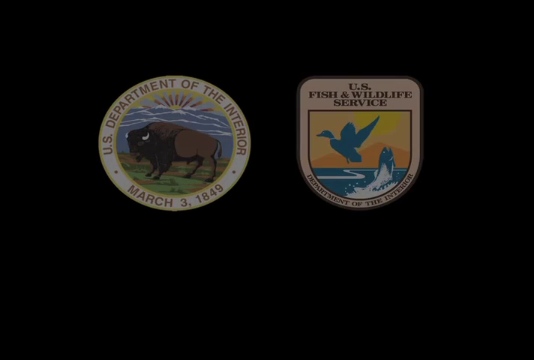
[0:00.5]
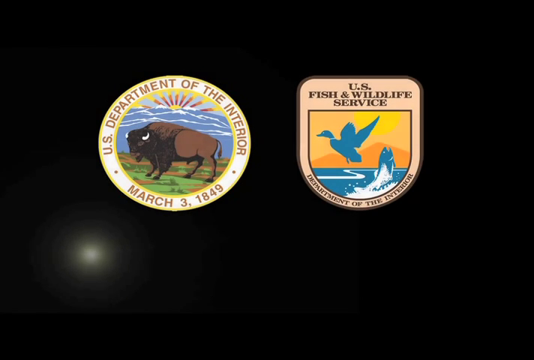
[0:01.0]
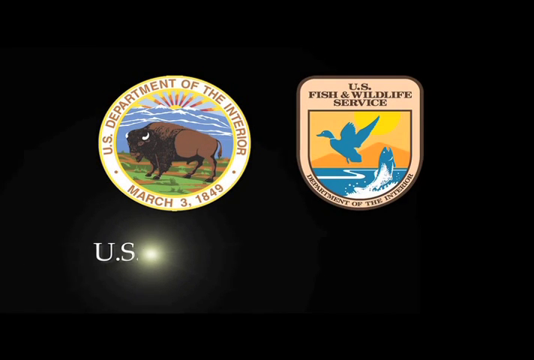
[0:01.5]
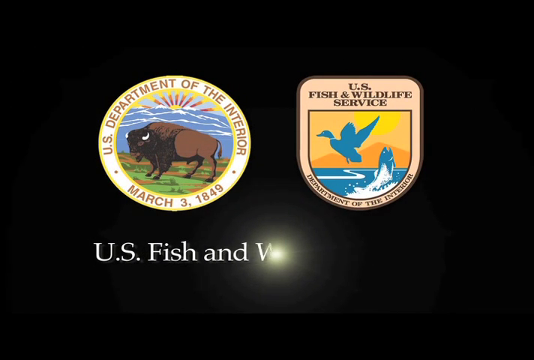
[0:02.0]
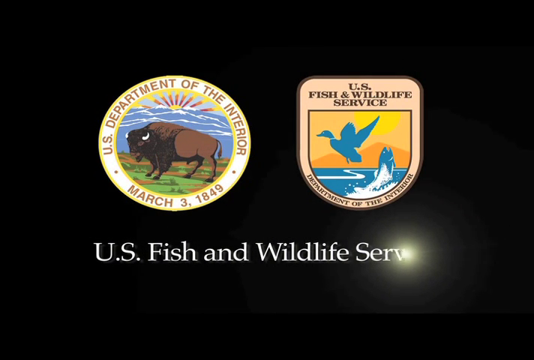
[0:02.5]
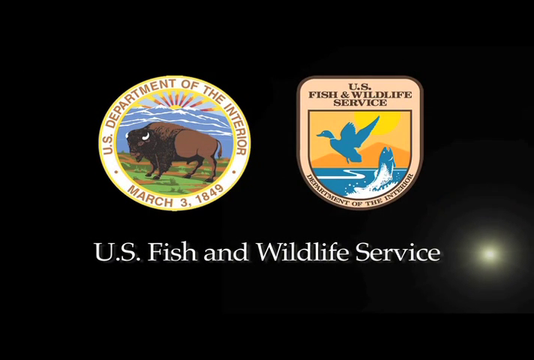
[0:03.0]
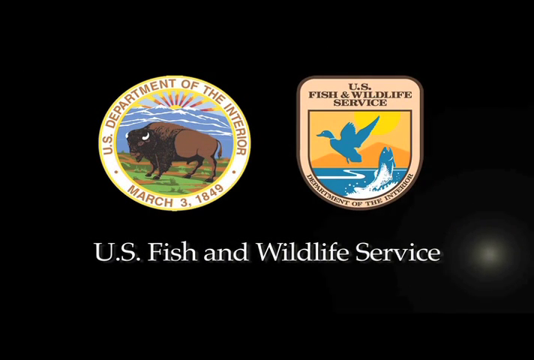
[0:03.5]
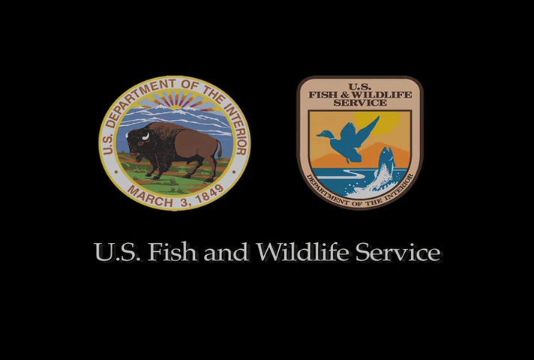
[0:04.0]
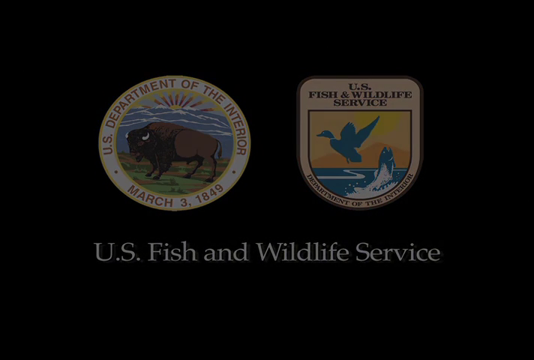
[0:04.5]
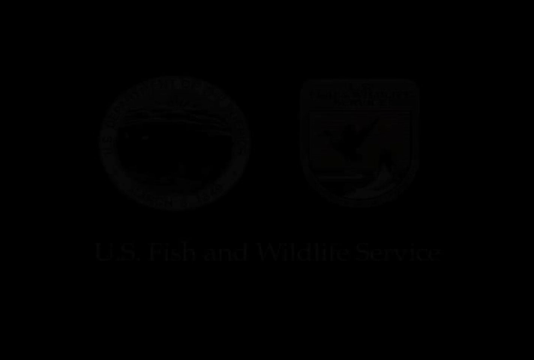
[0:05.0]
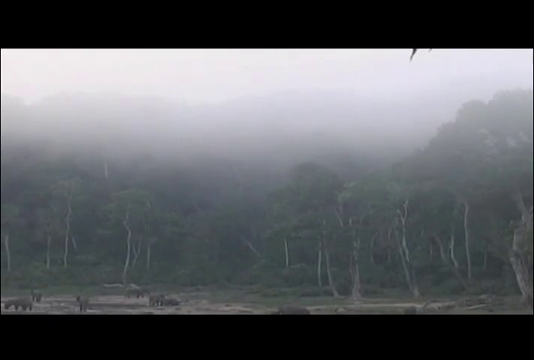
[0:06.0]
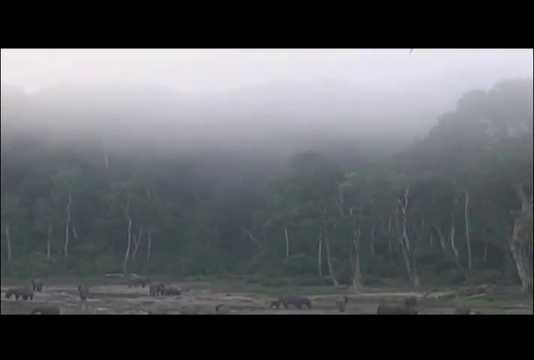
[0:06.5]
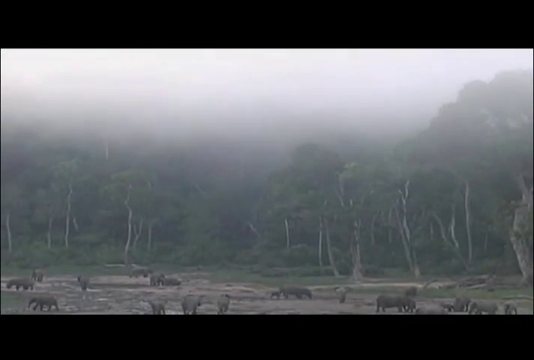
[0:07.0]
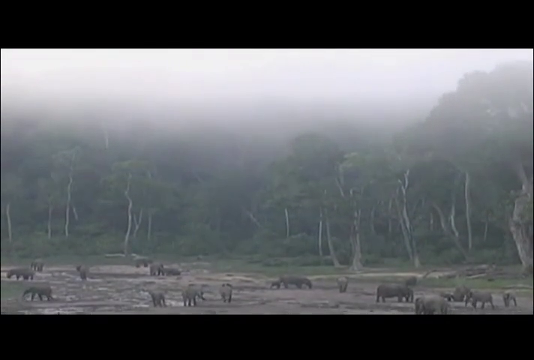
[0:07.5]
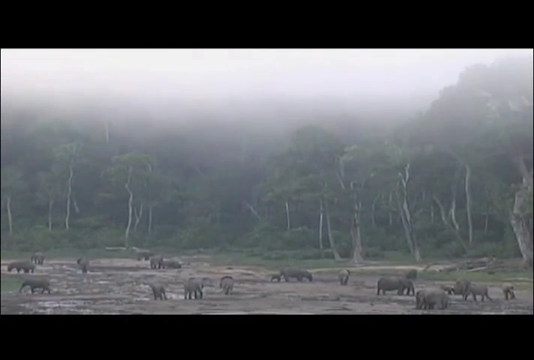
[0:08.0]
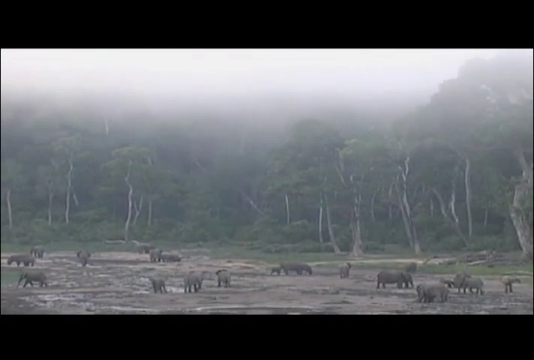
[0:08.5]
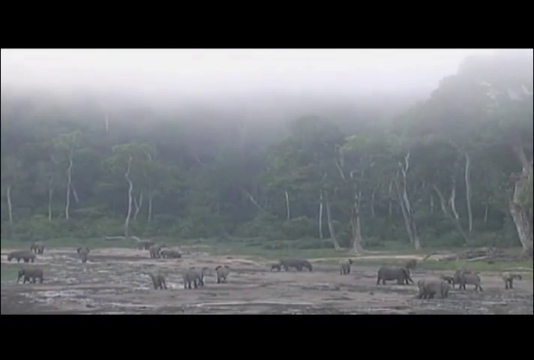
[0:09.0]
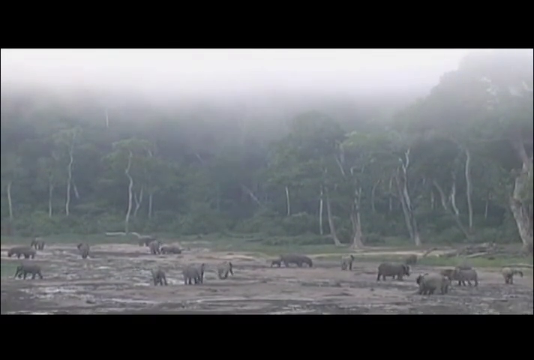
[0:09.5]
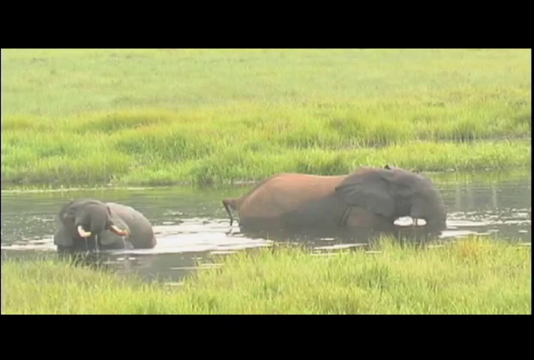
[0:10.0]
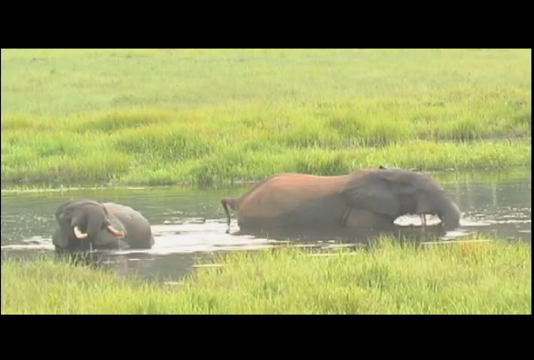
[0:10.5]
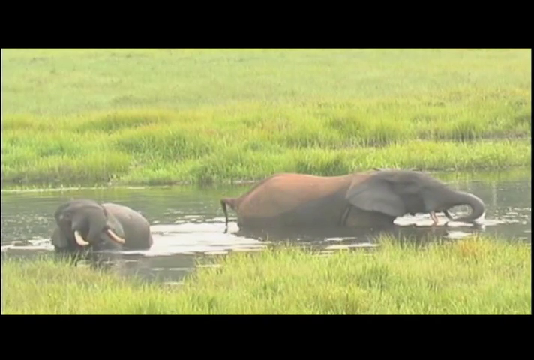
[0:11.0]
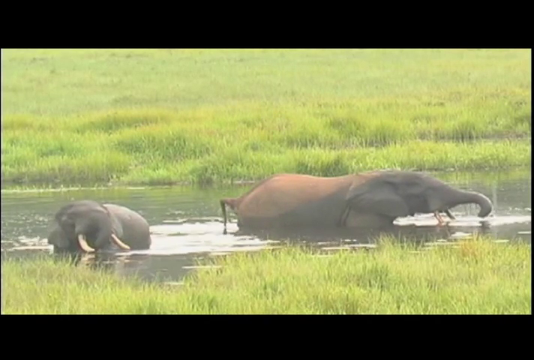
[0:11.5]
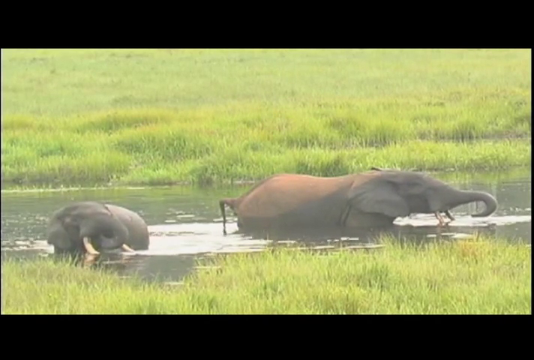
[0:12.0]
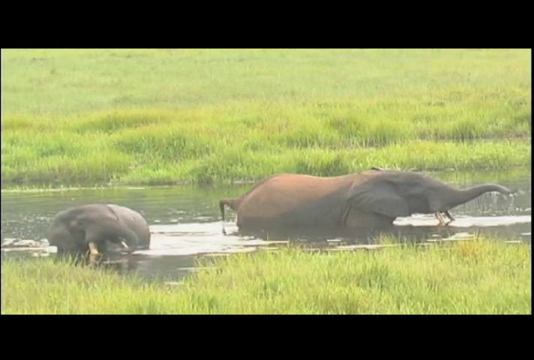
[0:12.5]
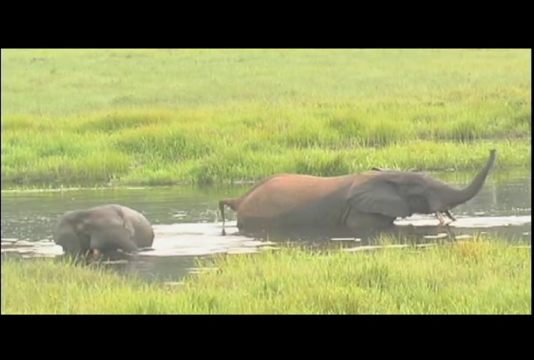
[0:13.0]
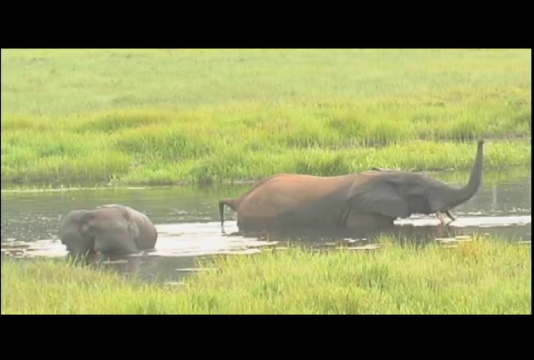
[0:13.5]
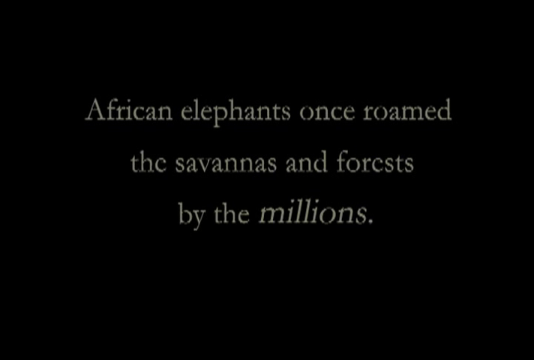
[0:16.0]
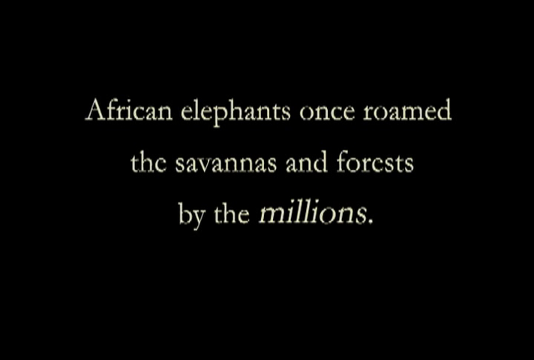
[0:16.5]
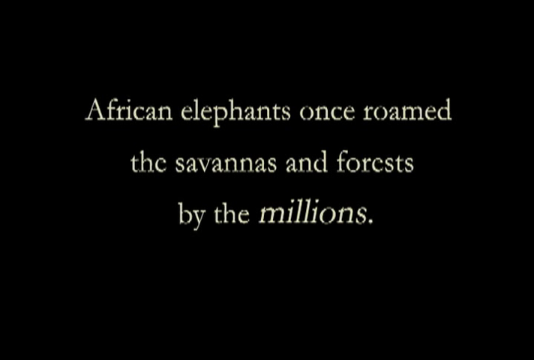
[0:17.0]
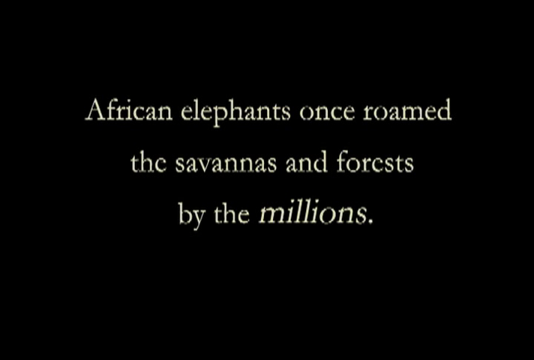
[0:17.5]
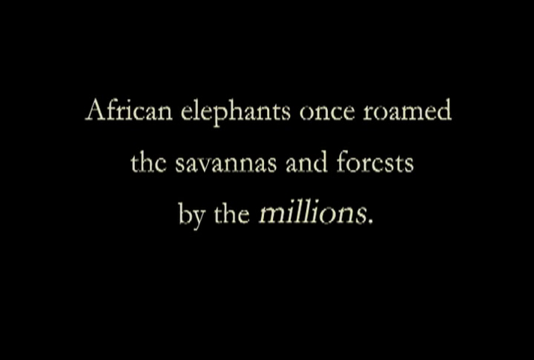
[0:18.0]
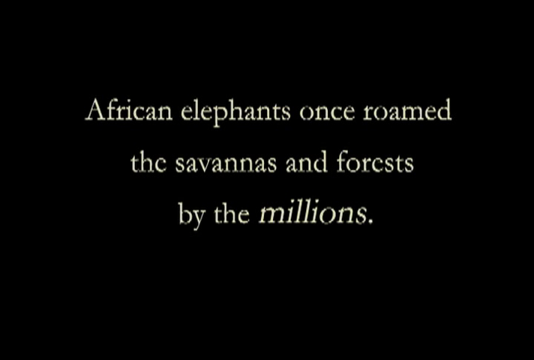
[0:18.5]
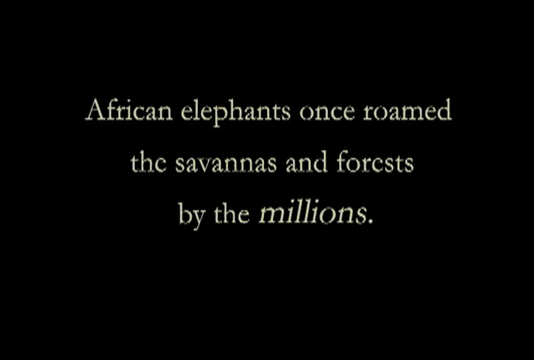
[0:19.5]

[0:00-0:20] The video opens on a black screen bearing the emblems of the Department of the Interior and U.S. Fish and Wildlife, with white text at the bottom that reads "United States Fish and Wildlife." It cuts to a long-range shot of several elephants and some trees in what looks like early morning; there is mist, and elephants are scattered here and there. A closer shot follows of two elephants in a pond or water source, the elephant on the right lifting its trunk into the air. The screen goes black, and white text reads "African elephants once roamed the savannas and forest by the millions." The screen then flashes to what looks like an interview with a dark-haired man sitting in a chair in an office. As he starts to speak, the black overlay comes back onto the screen.